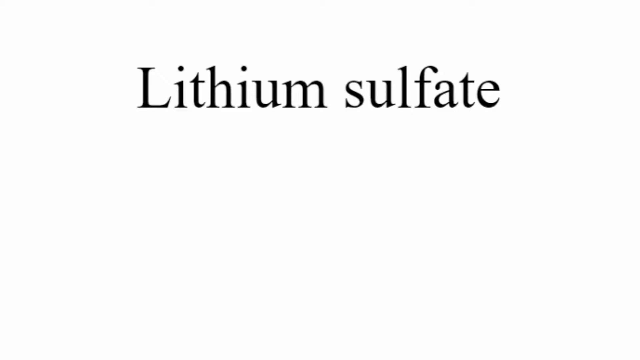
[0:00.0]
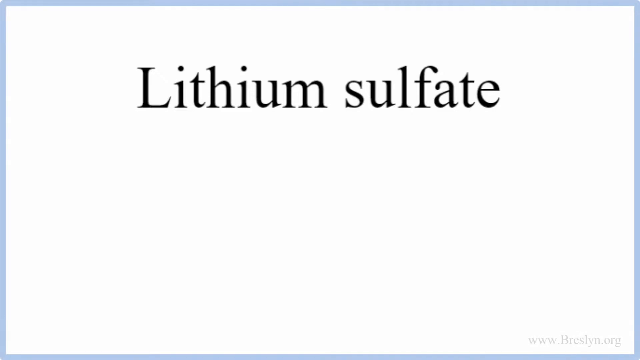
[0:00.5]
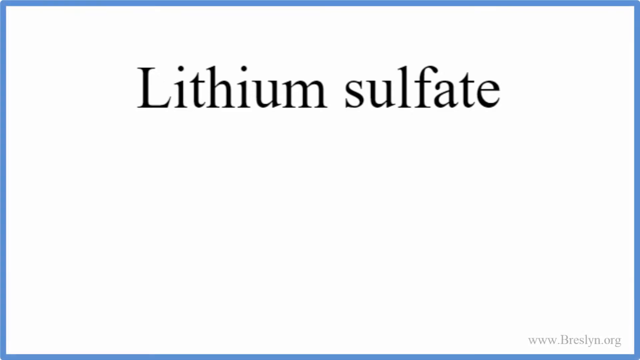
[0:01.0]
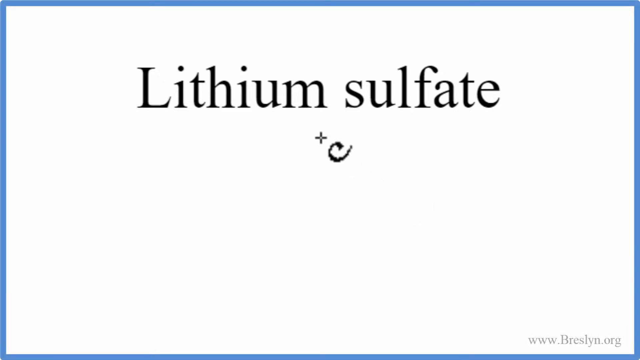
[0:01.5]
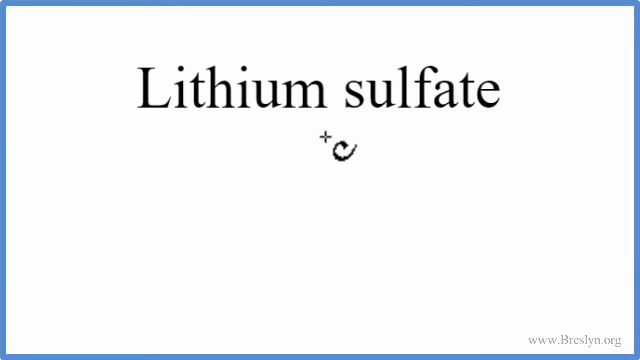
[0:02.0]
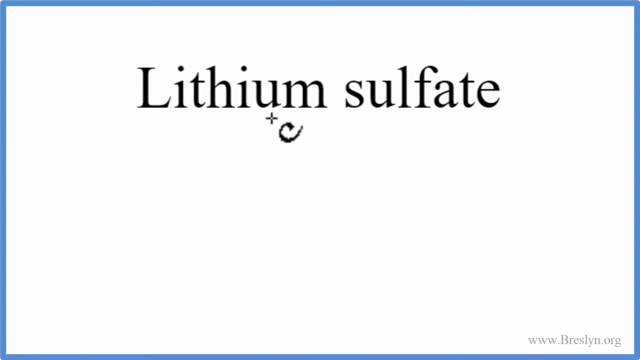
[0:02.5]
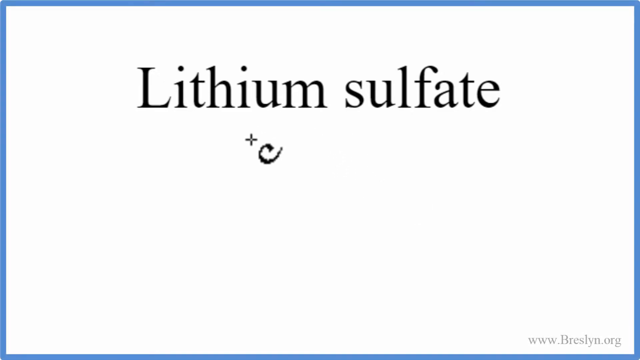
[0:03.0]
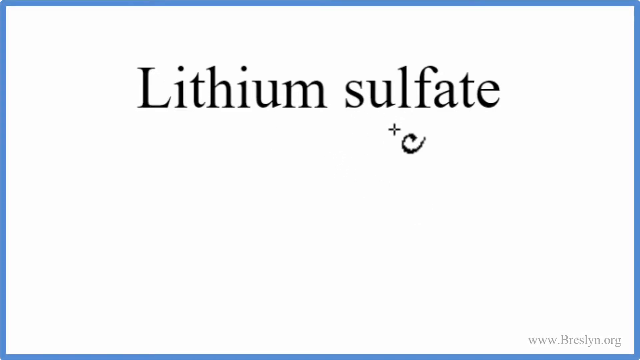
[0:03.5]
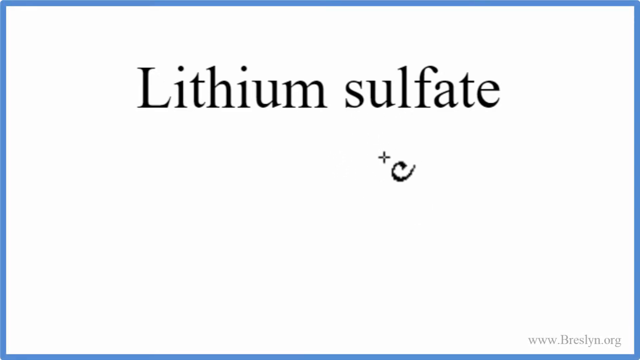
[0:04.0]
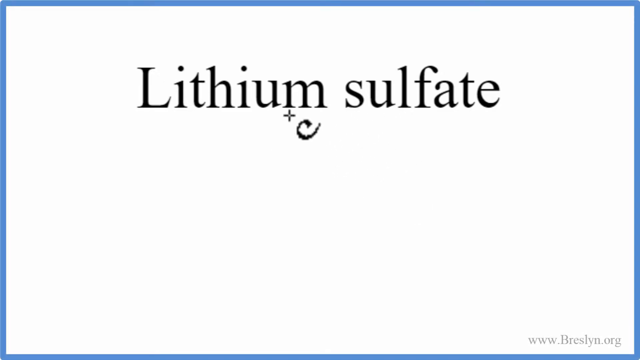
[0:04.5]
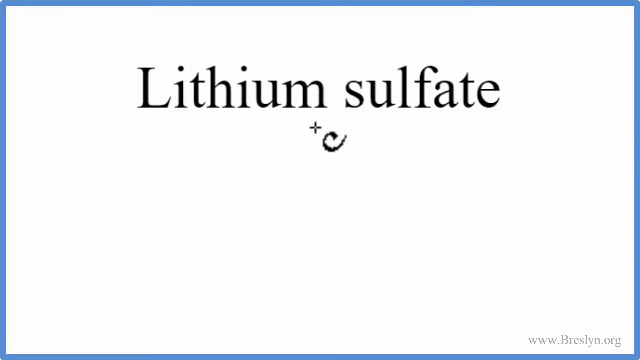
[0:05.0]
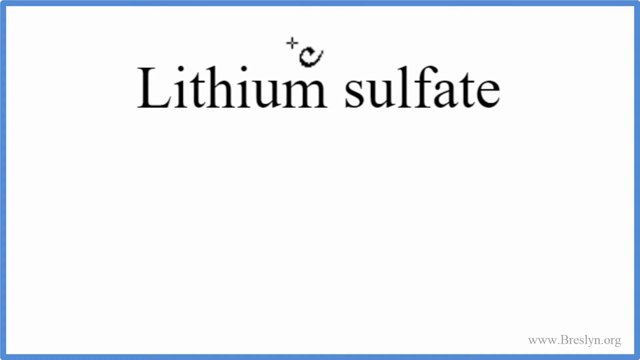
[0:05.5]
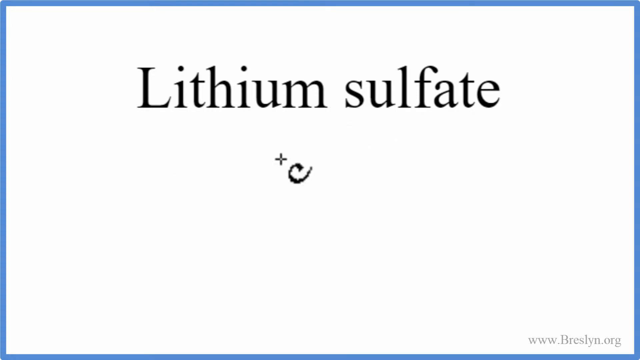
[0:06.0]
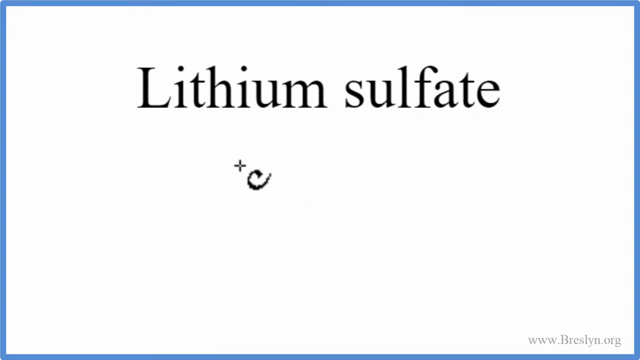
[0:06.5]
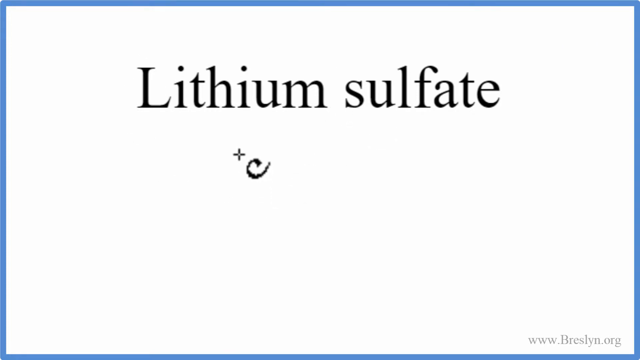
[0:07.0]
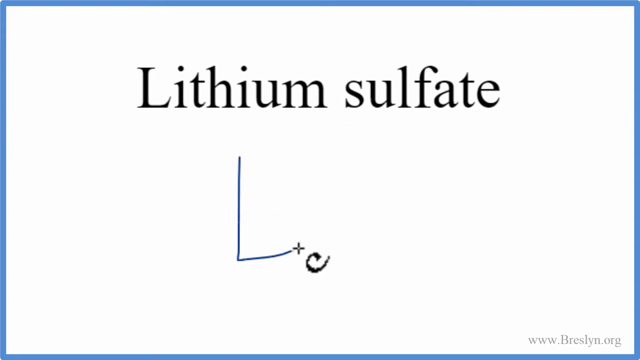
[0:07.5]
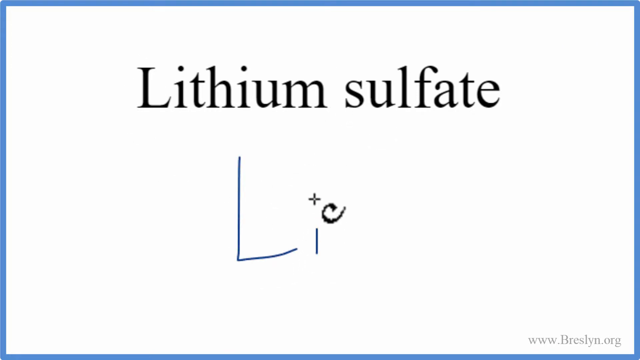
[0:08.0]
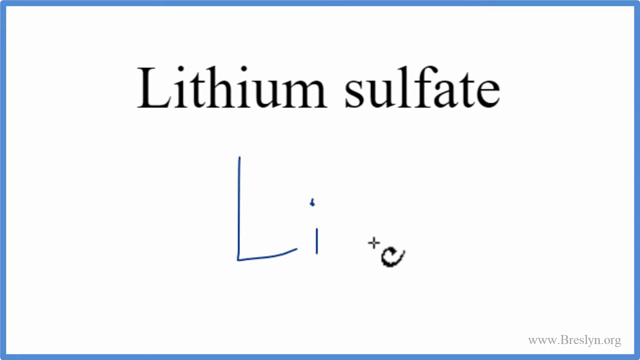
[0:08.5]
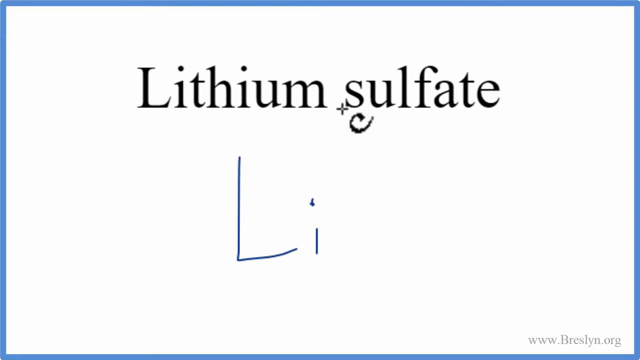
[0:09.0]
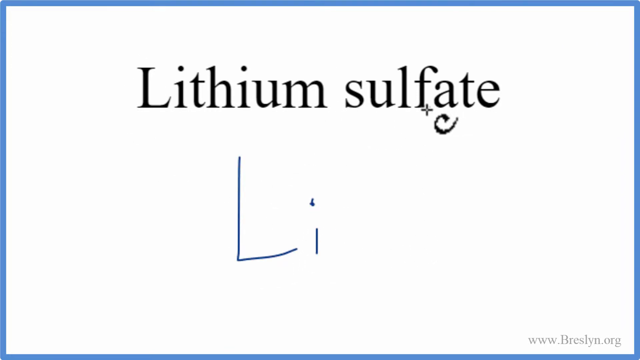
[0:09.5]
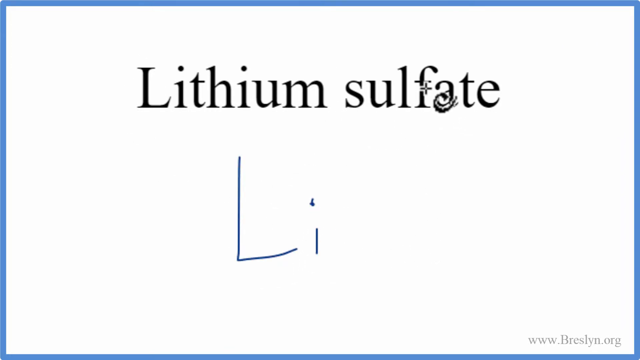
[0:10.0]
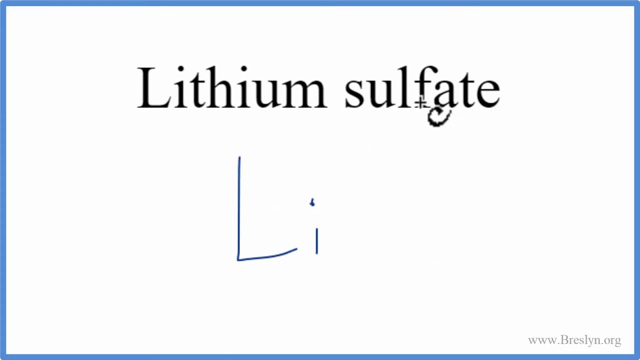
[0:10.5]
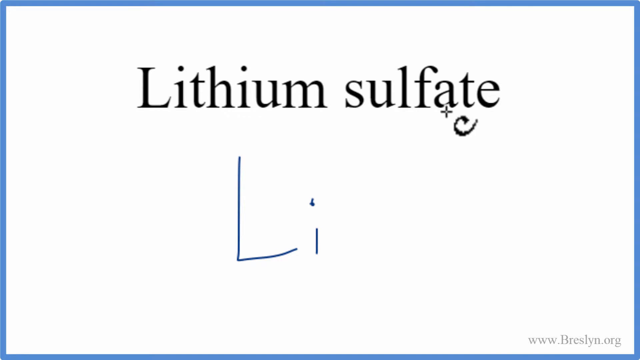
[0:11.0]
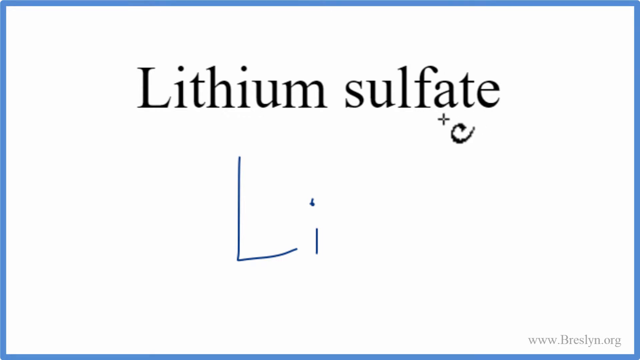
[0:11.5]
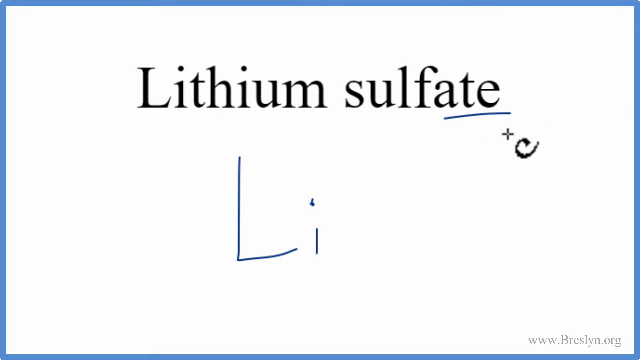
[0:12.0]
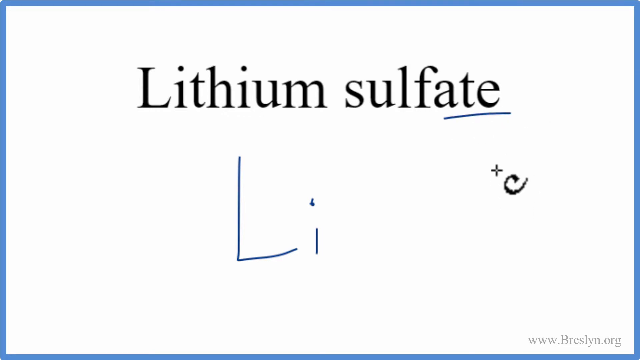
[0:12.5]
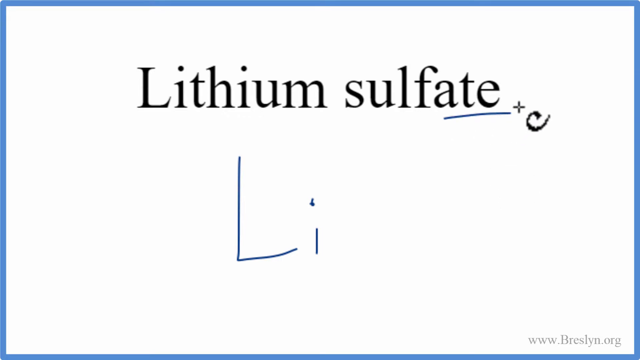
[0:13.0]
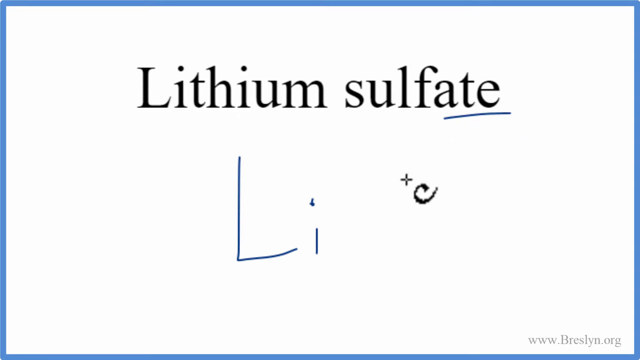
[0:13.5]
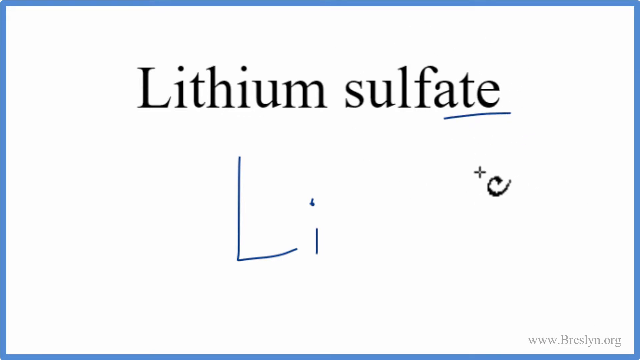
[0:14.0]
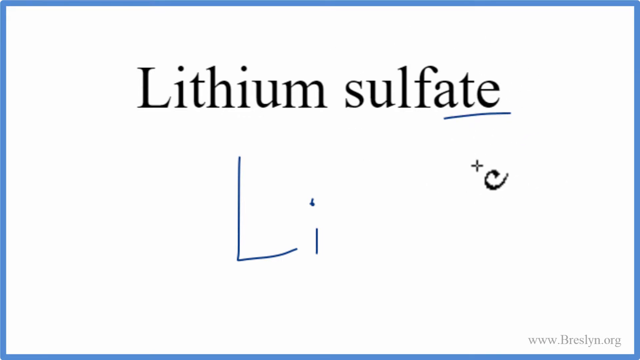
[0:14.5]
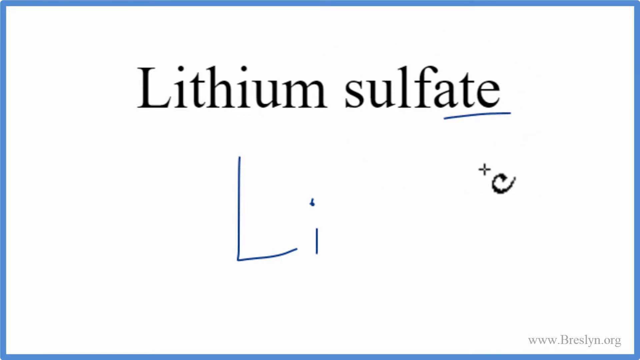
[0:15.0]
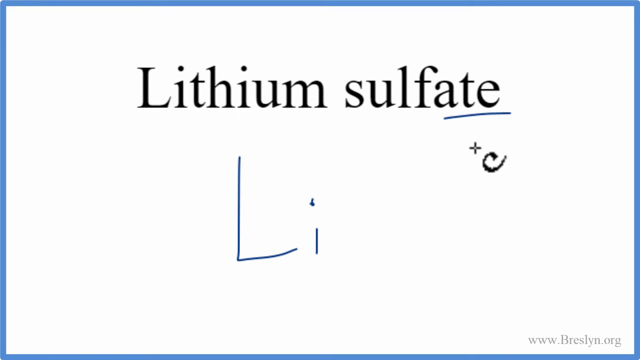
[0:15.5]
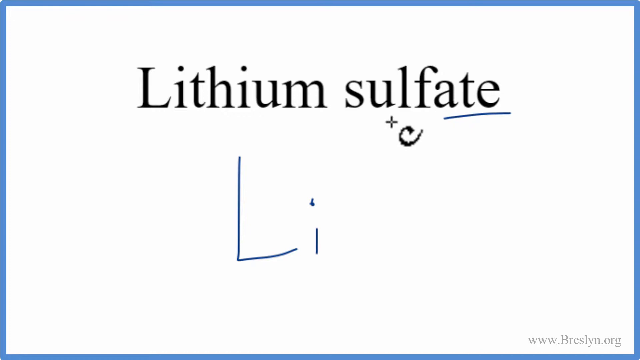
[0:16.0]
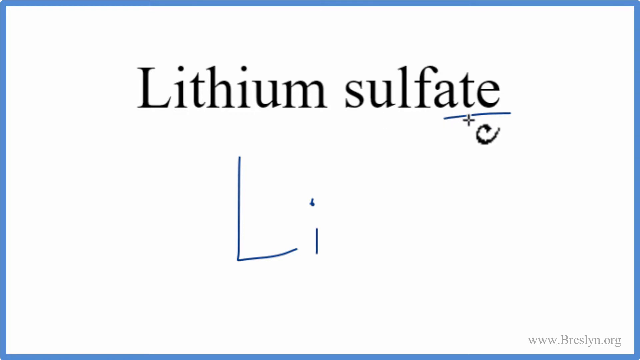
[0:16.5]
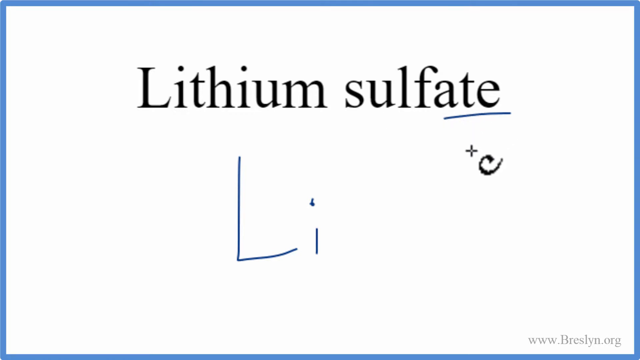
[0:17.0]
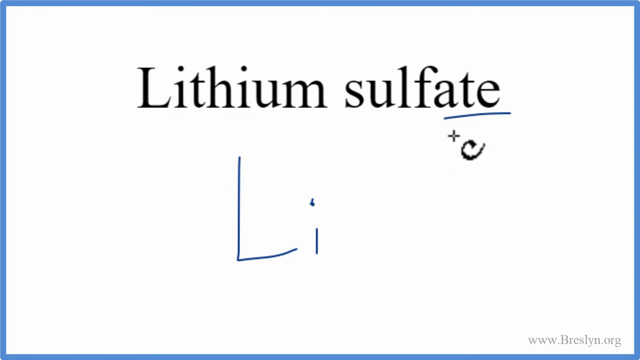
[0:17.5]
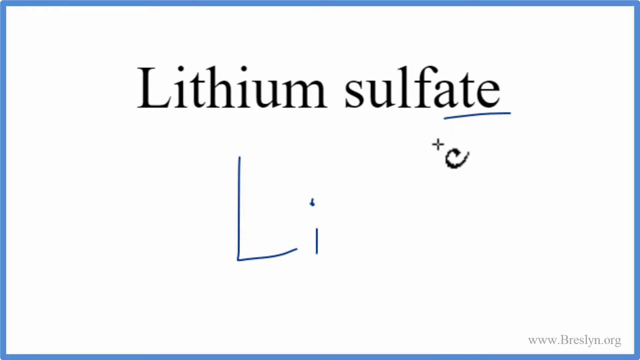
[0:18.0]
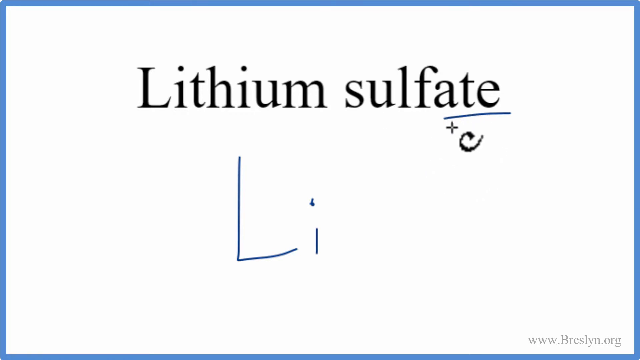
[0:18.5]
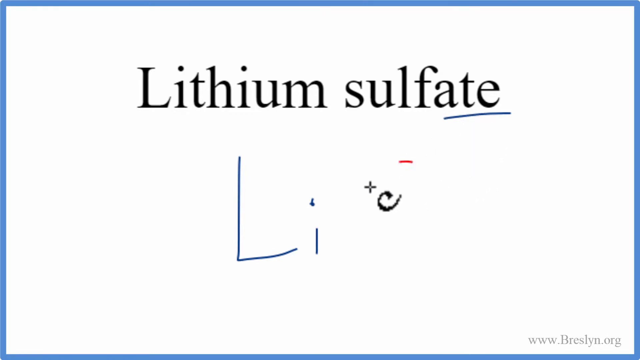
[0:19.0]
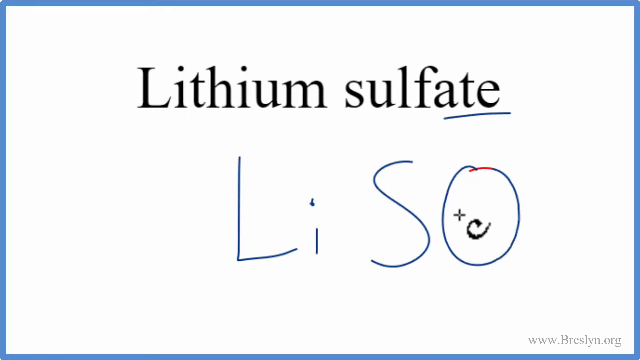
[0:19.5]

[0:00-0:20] The video opens with the title "Lithium Sulfate" written in black on a solid white background. A cursor with a cross points at the words "Lithium Sulfate." Using a circular motion, it writes out Li in blue pen, then underlines the "ate" in sulfate. It then writes SO4, apparently giving the element forms: Li for lithium and SO4 for sulfate.